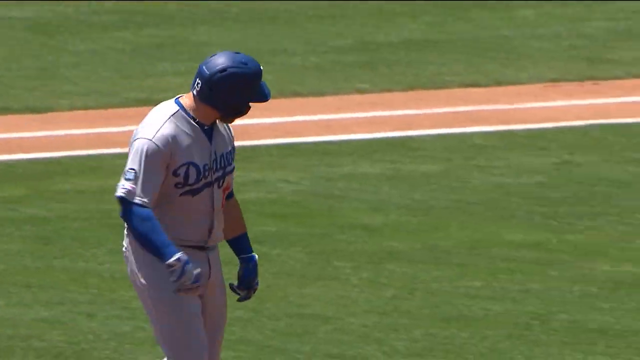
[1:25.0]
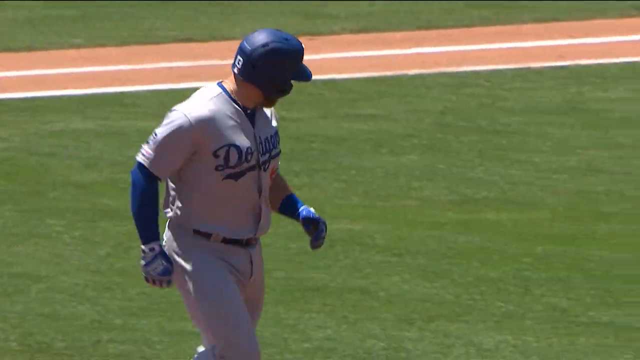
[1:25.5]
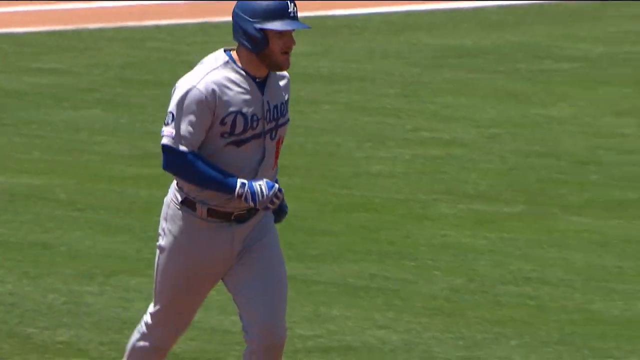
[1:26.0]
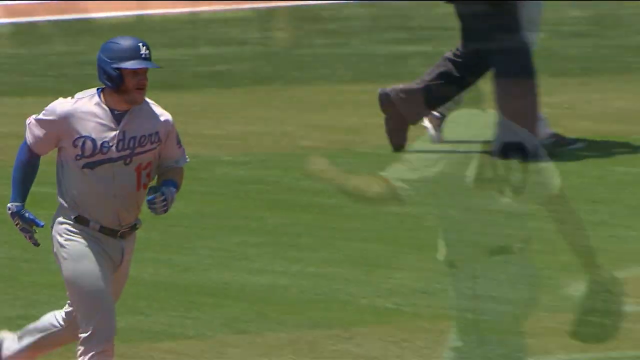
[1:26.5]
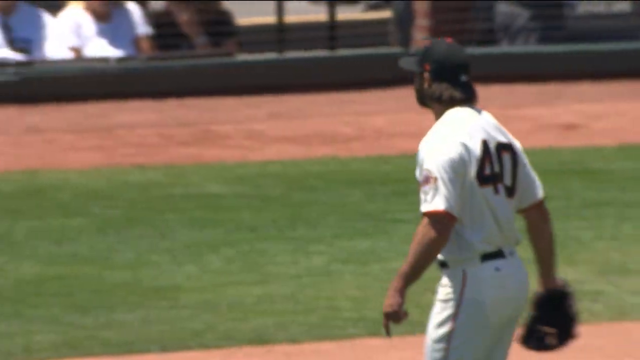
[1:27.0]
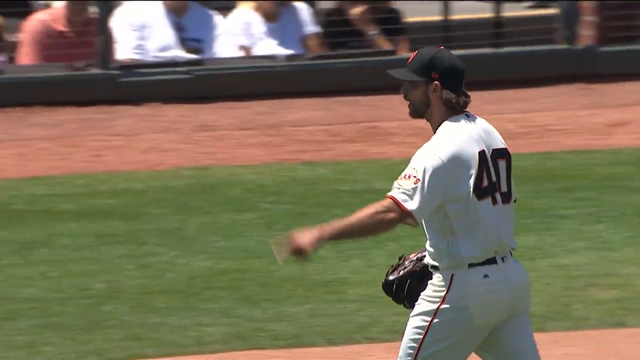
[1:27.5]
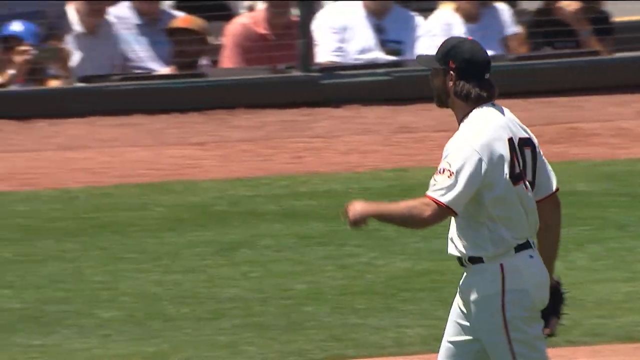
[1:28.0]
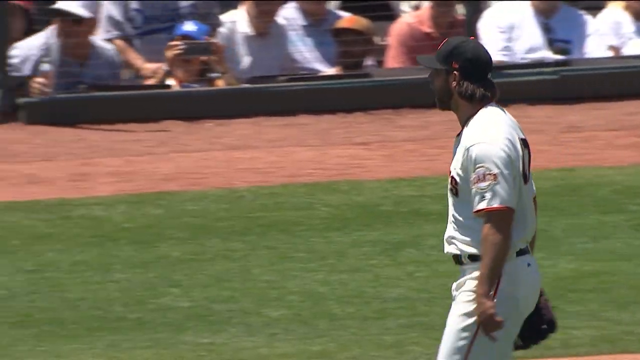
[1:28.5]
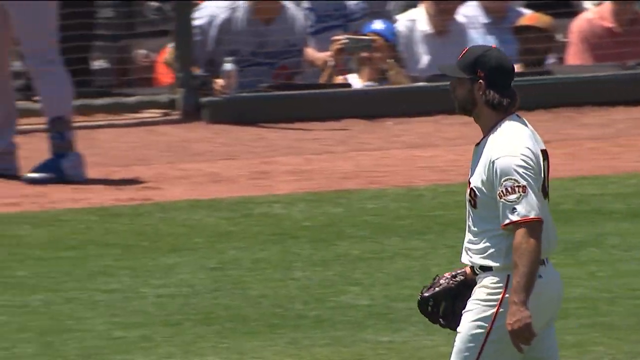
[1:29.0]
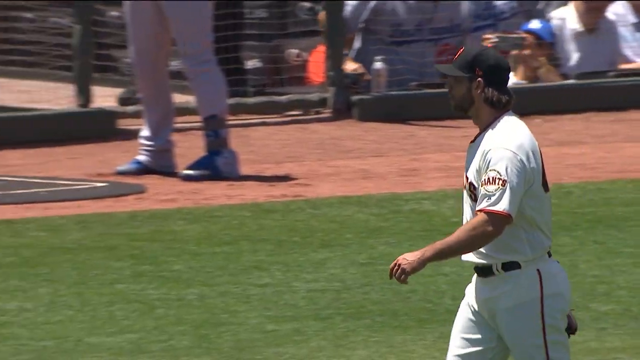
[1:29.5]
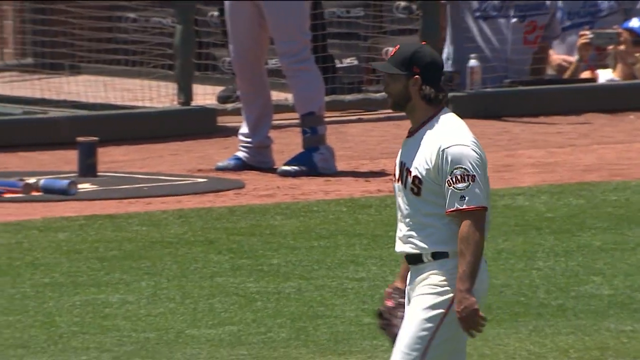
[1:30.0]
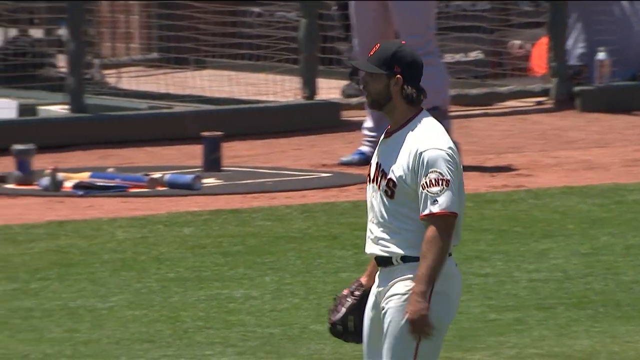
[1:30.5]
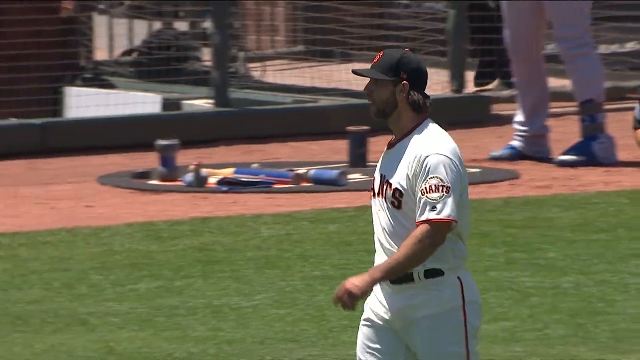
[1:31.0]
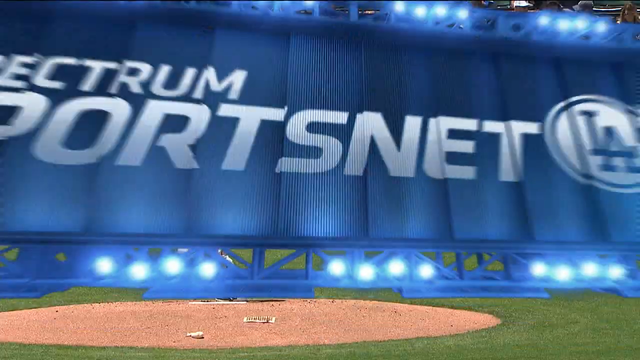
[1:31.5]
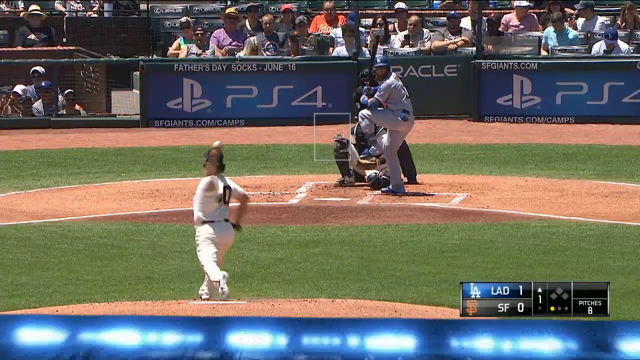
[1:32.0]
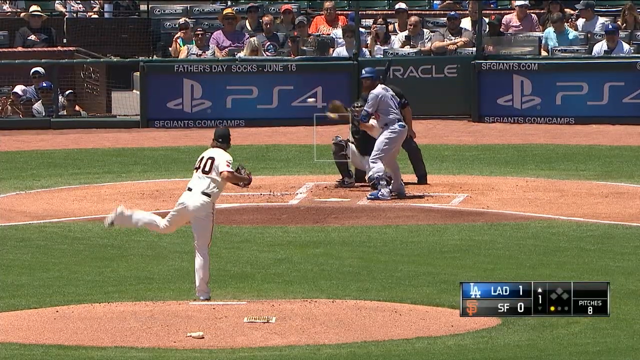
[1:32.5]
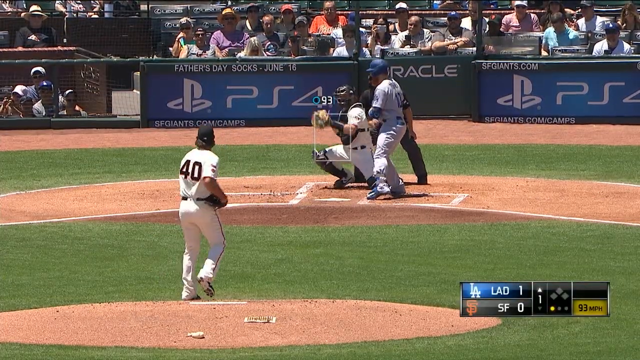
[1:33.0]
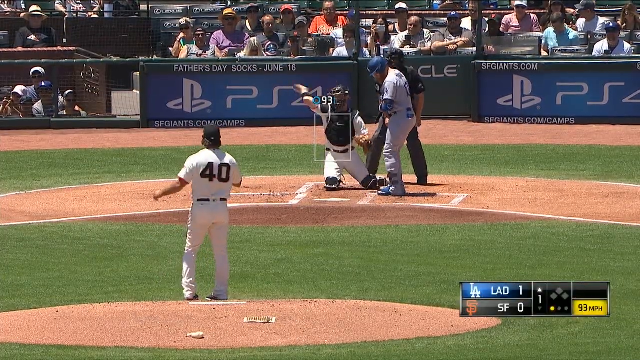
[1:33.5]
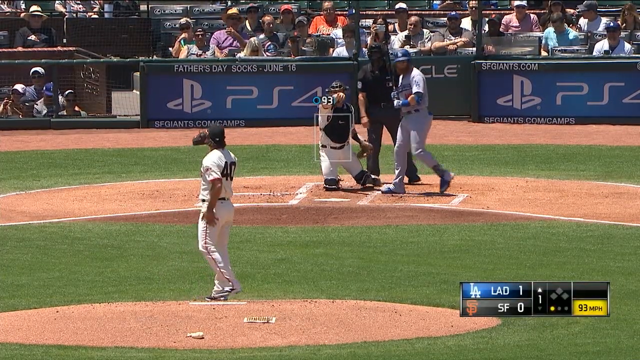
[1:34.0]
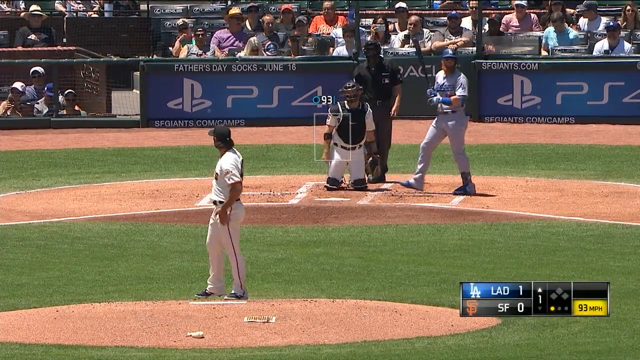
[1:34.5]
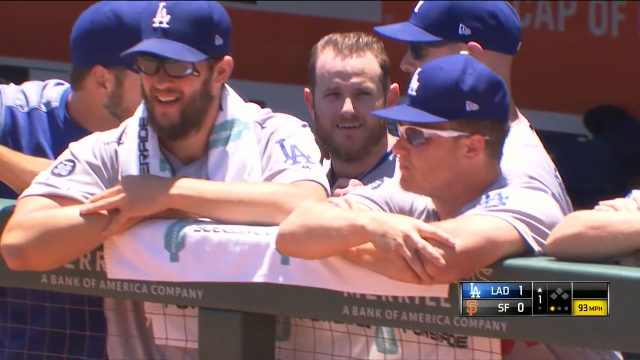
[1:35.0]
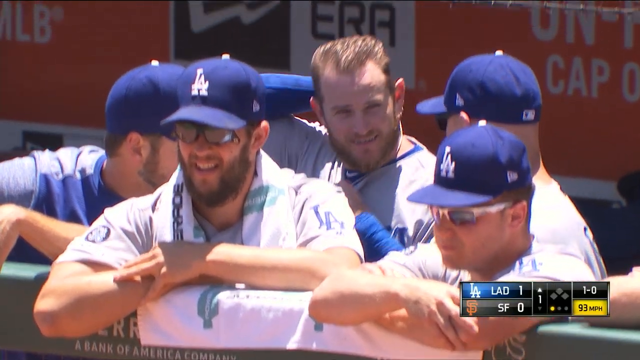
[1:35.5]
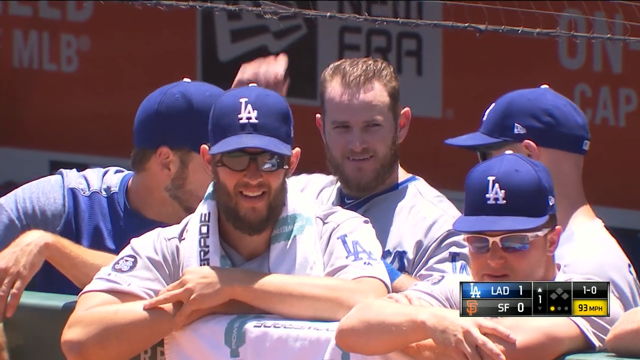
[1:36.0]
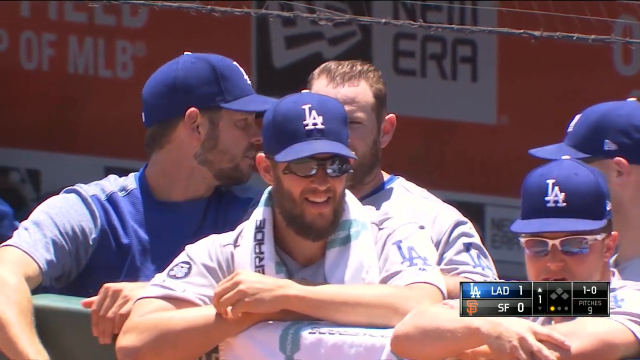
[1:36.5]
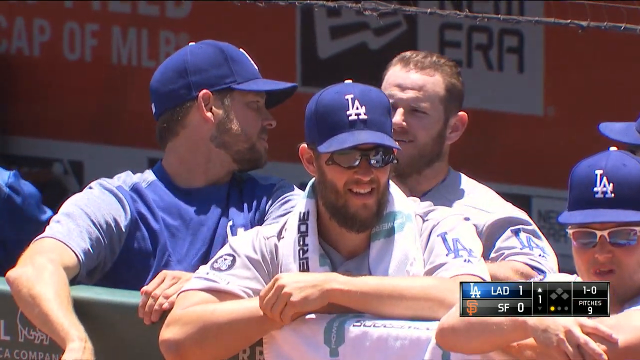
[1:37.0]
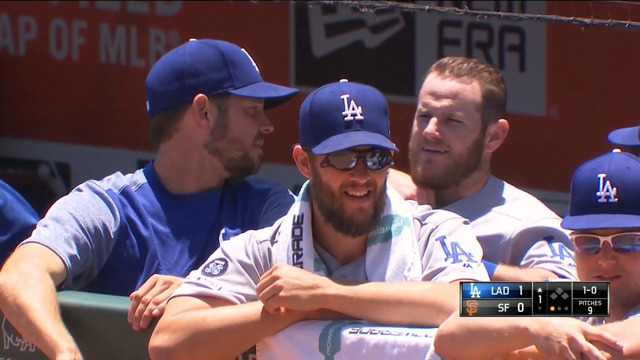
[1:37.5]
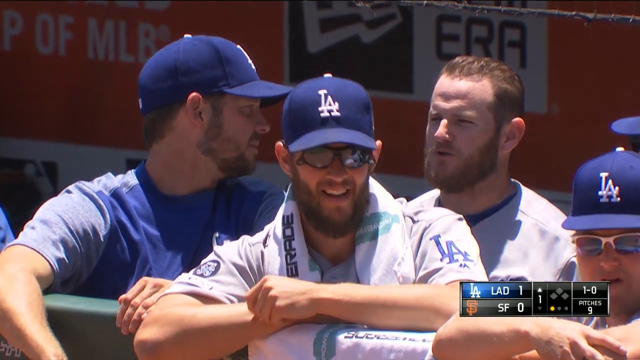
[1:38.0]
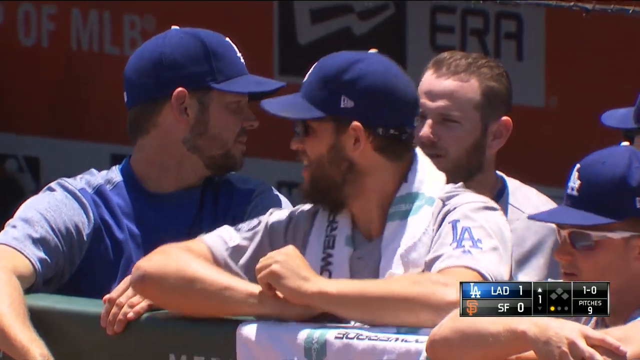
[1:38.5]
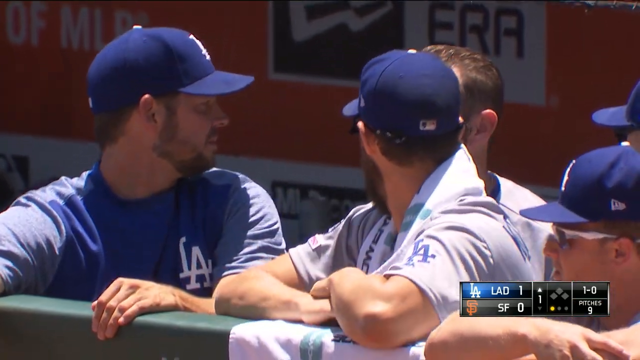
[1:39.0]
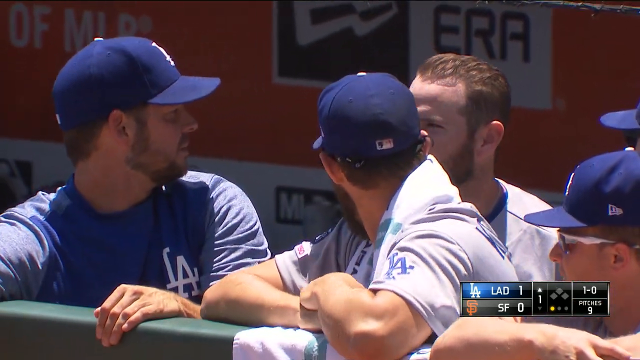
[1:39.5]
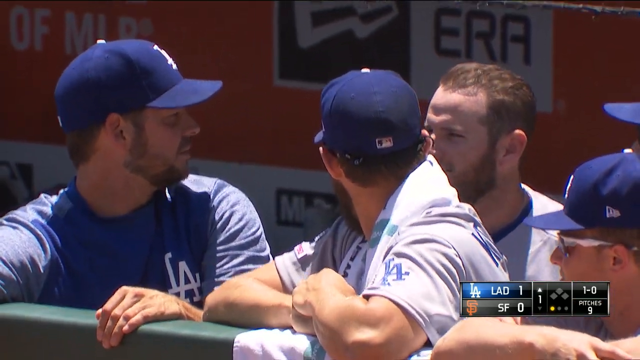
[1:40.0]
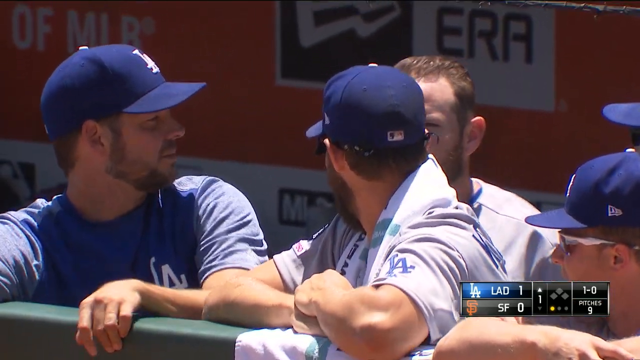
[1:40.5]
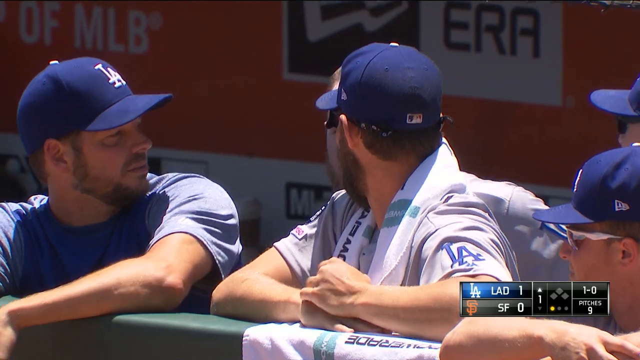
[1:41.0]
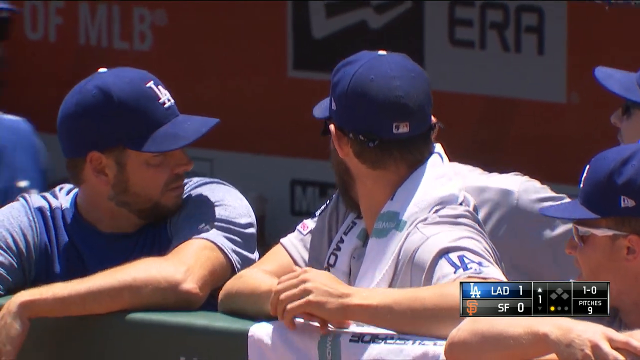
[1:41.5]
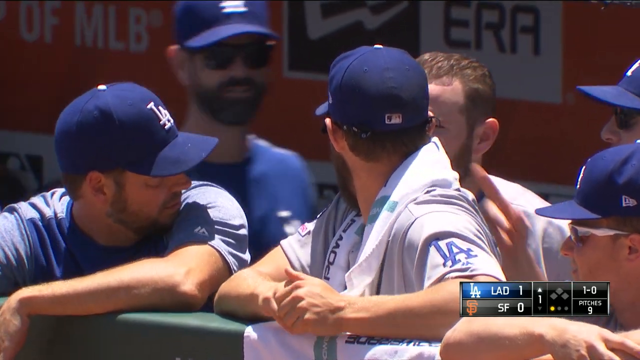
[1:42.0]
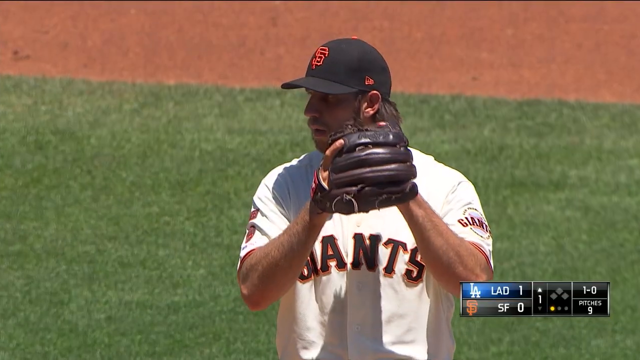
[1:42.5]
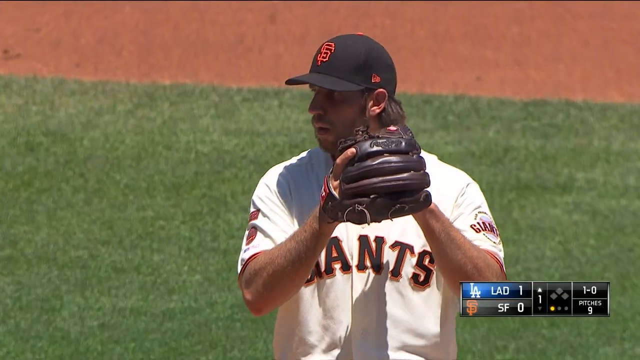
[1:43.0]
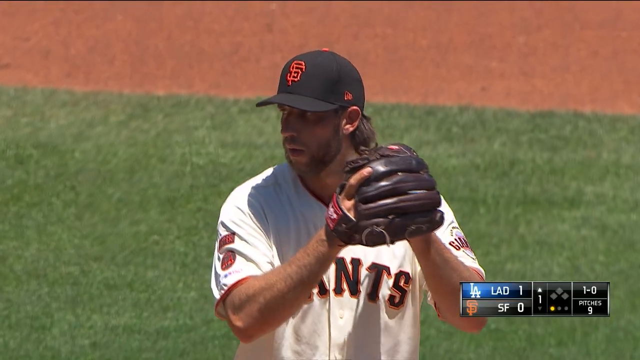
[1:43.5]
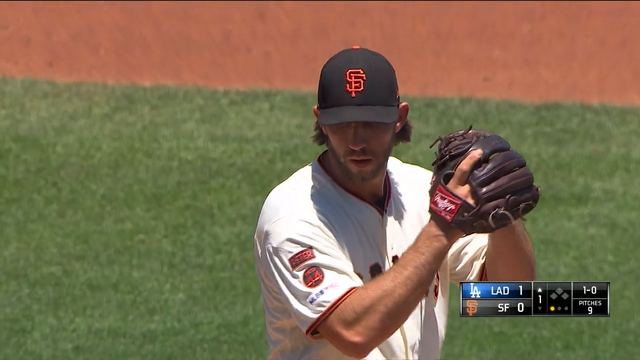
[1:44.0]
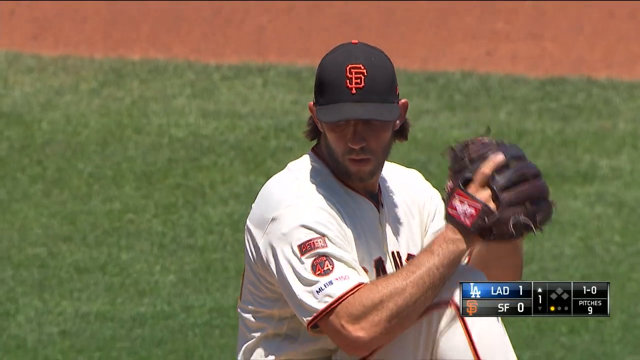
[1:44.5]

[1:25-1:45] Max, the batter, runs on the field. The shot cuts to the pitcher winding up to give his pitch, then he walks around, gesturing and talking. The batter is then shown without his helmet, with kind of auburn hair and a beard, in the dugout but outside in the sun area, talking to other players. It is apparently still number 13.